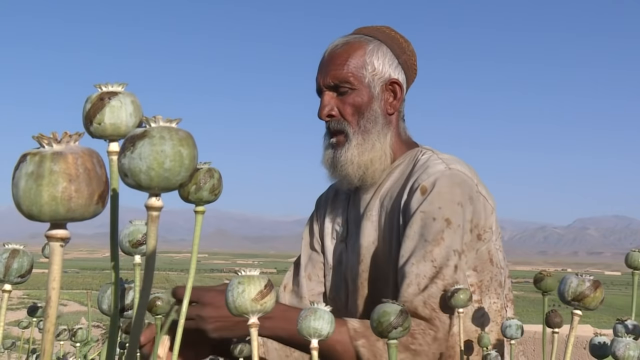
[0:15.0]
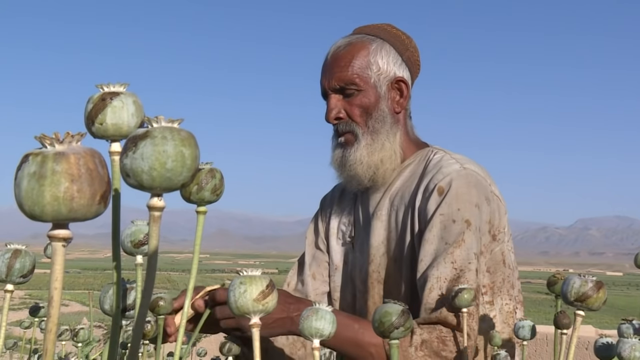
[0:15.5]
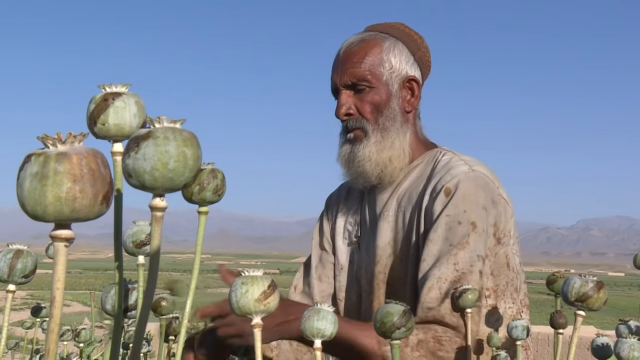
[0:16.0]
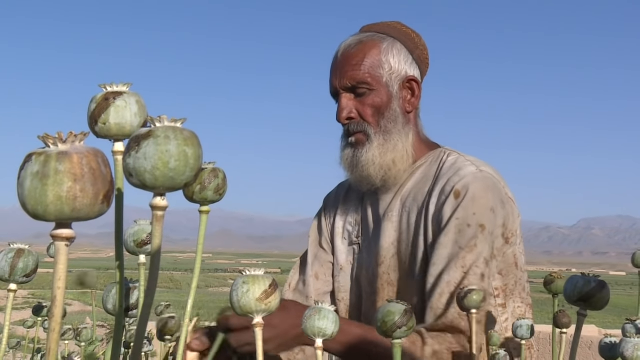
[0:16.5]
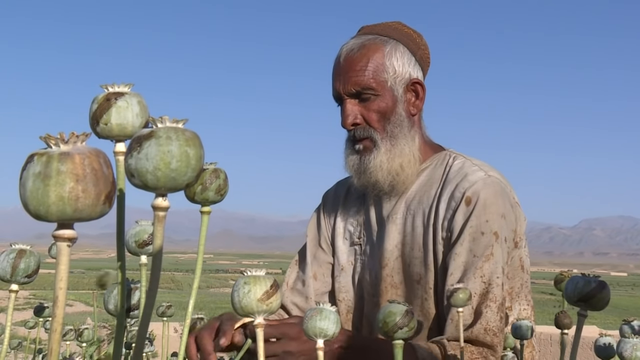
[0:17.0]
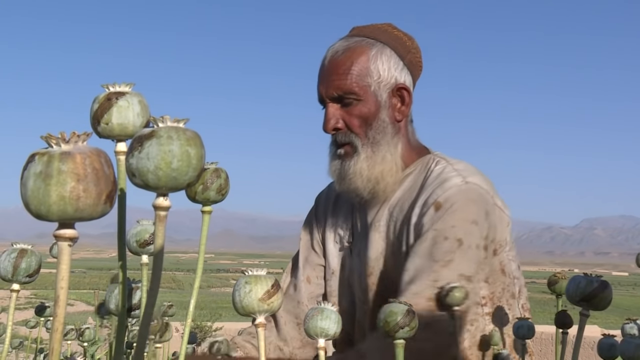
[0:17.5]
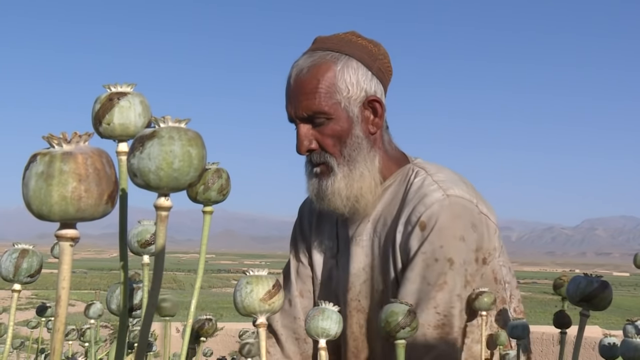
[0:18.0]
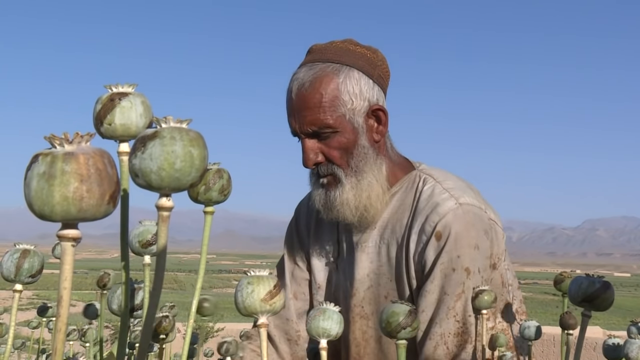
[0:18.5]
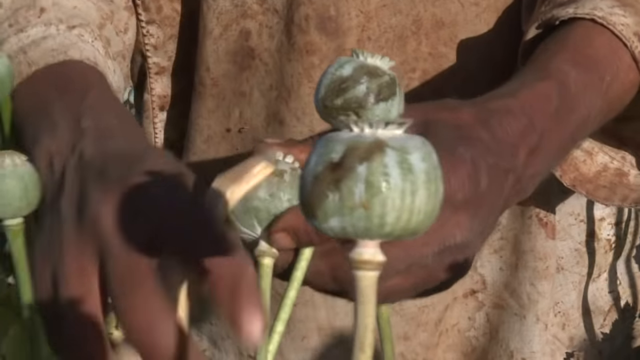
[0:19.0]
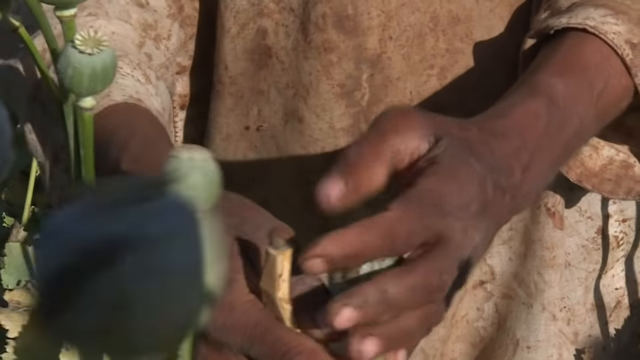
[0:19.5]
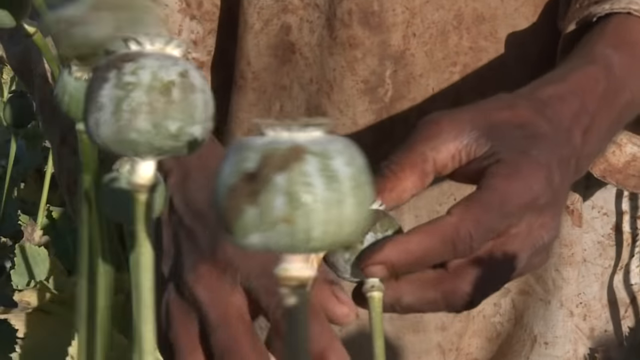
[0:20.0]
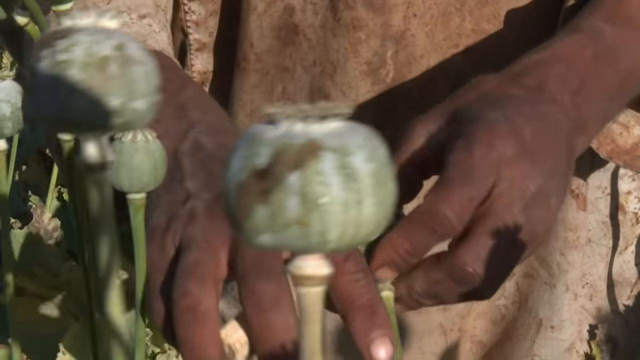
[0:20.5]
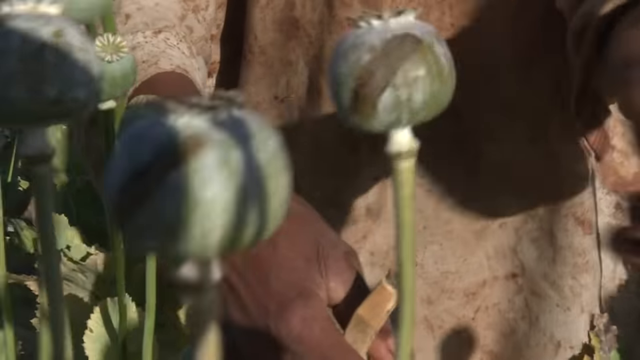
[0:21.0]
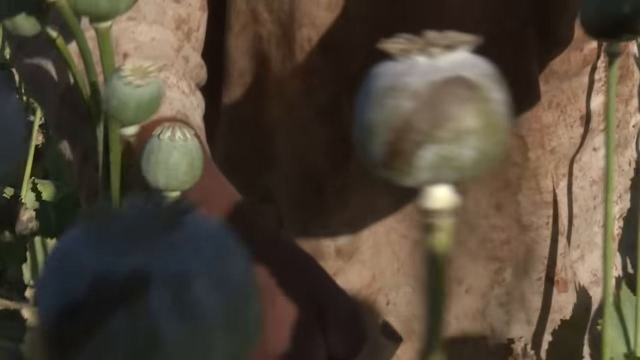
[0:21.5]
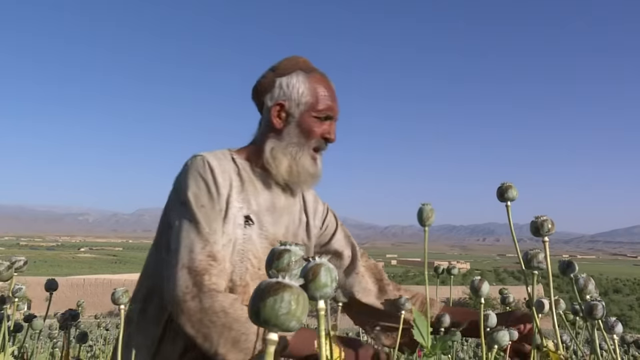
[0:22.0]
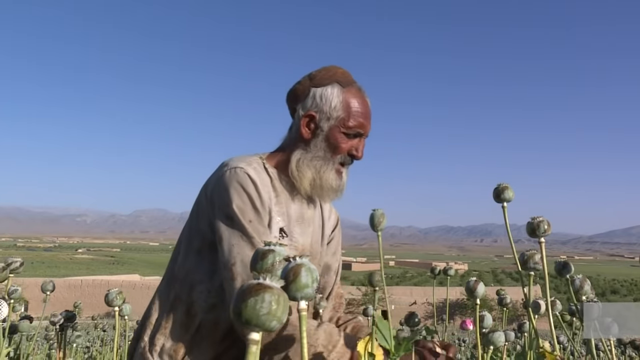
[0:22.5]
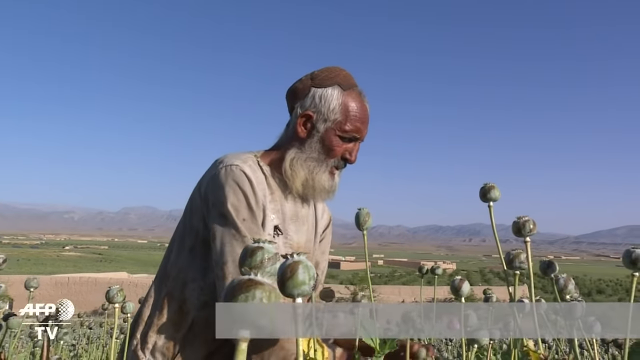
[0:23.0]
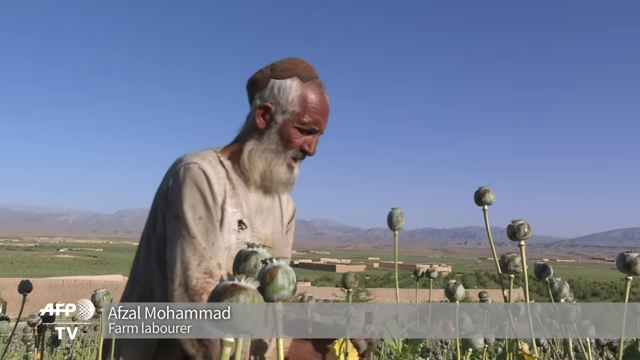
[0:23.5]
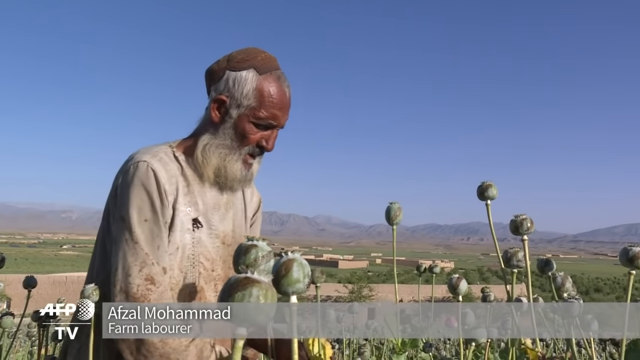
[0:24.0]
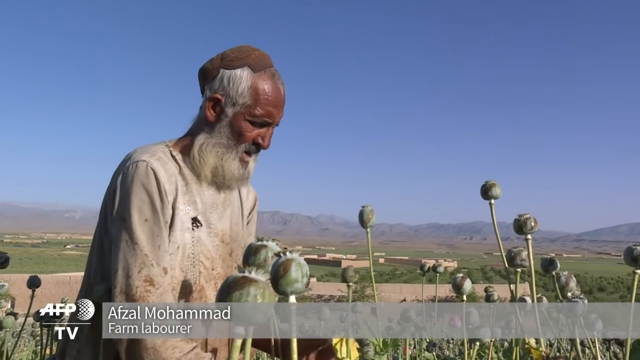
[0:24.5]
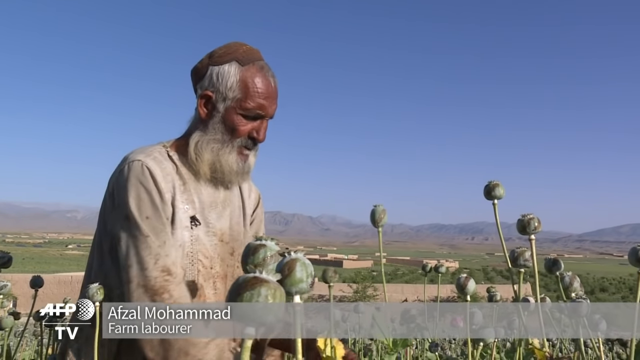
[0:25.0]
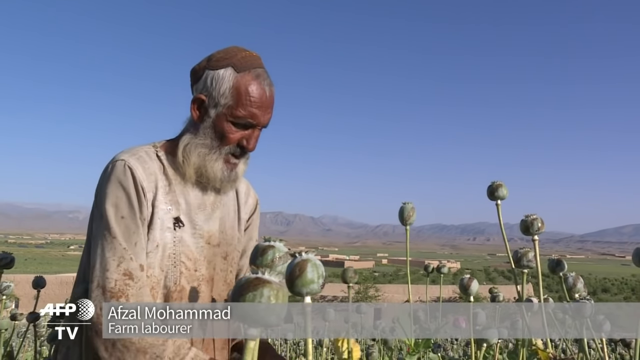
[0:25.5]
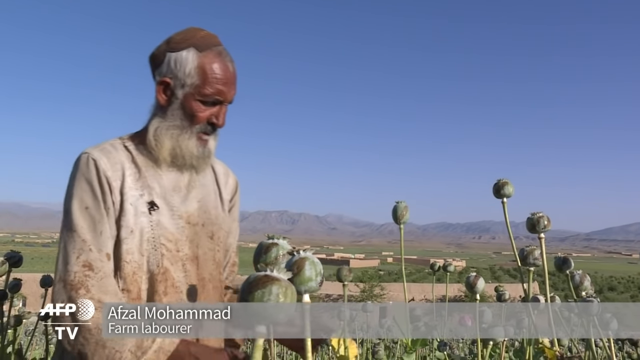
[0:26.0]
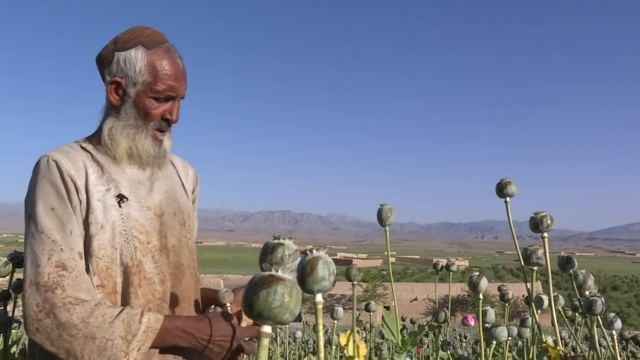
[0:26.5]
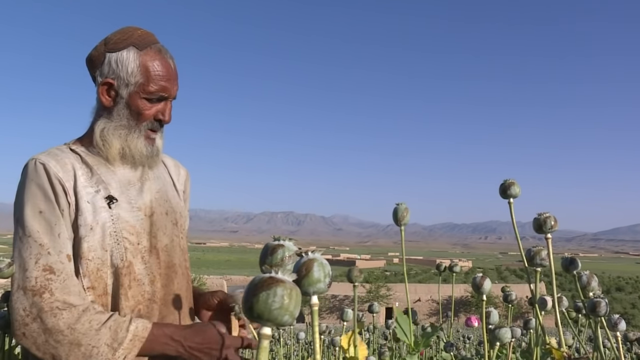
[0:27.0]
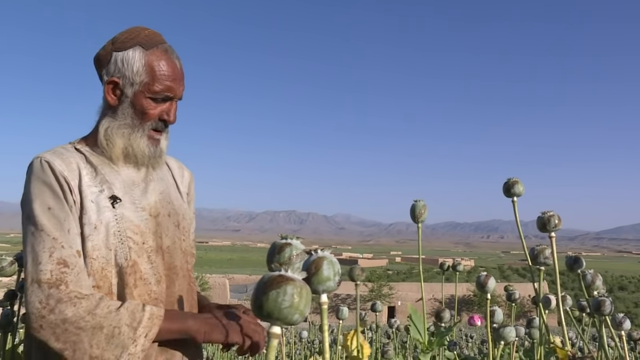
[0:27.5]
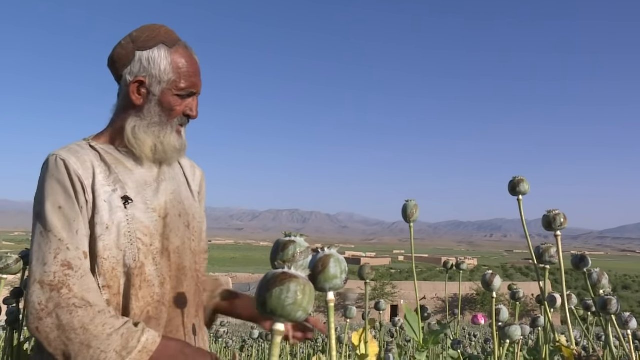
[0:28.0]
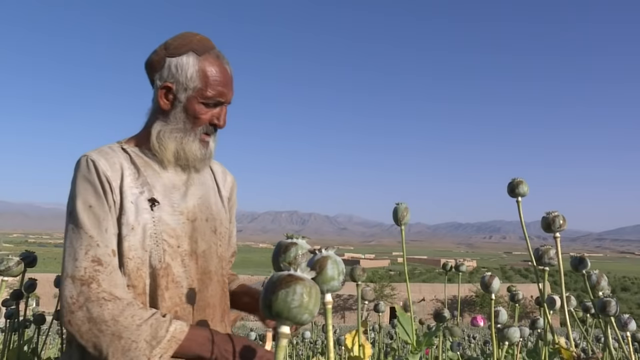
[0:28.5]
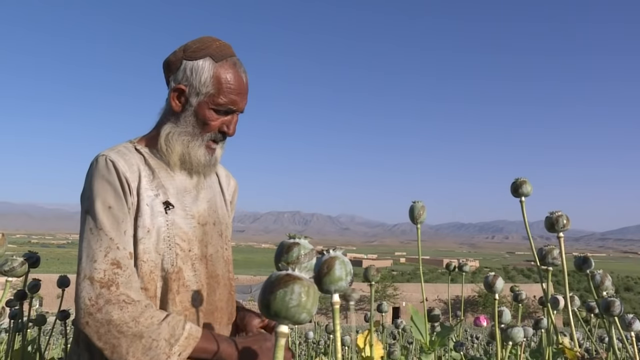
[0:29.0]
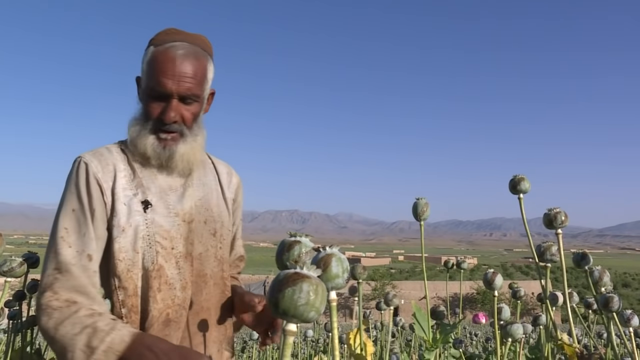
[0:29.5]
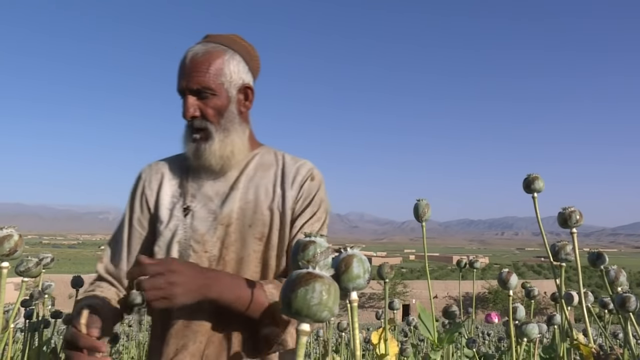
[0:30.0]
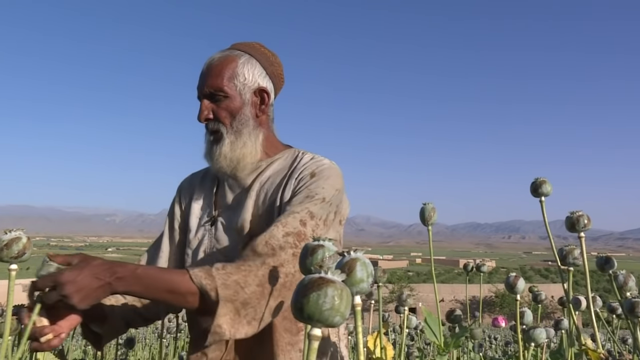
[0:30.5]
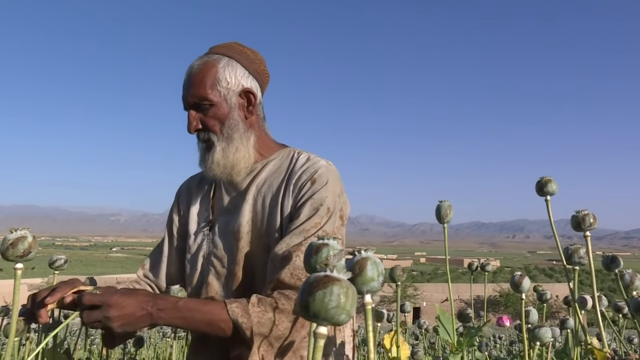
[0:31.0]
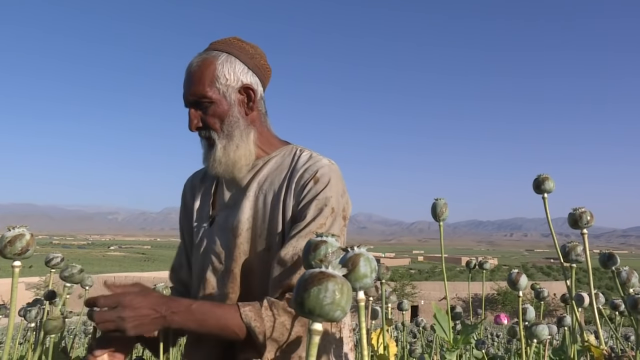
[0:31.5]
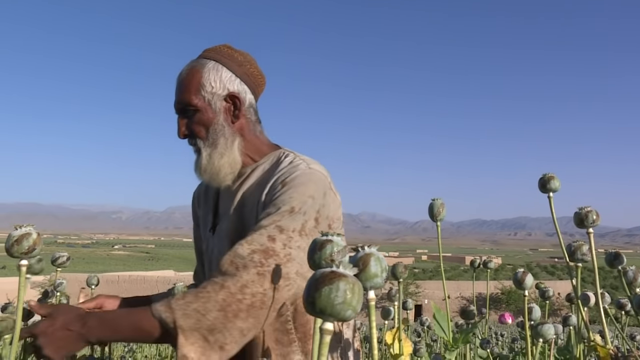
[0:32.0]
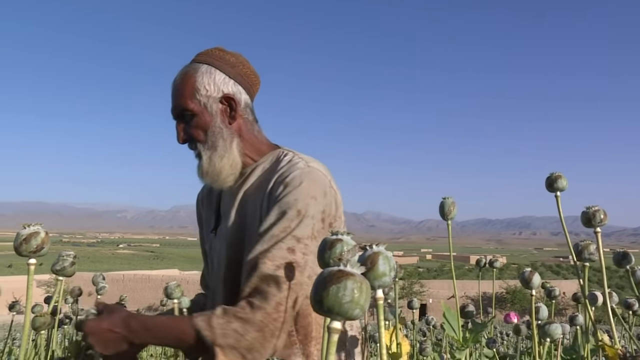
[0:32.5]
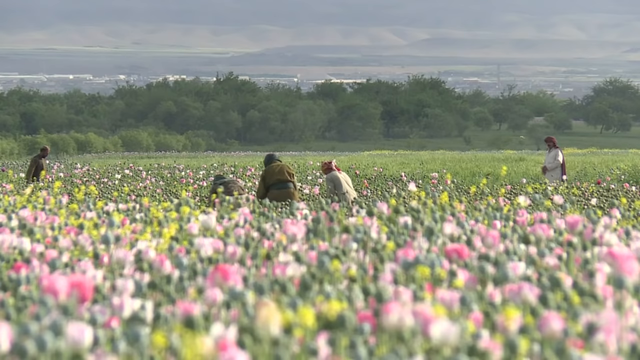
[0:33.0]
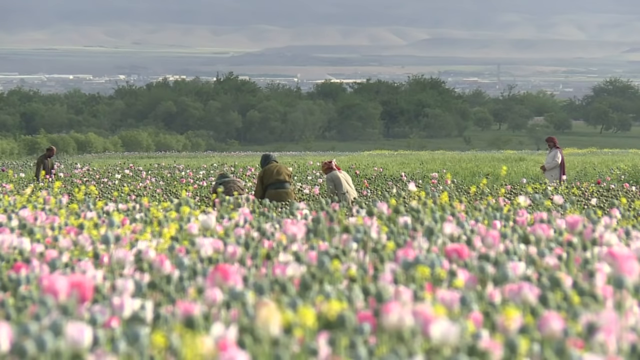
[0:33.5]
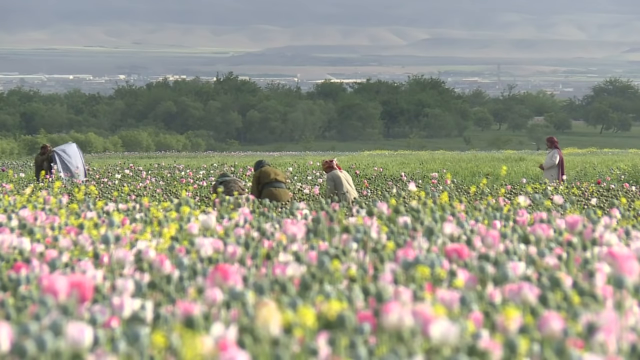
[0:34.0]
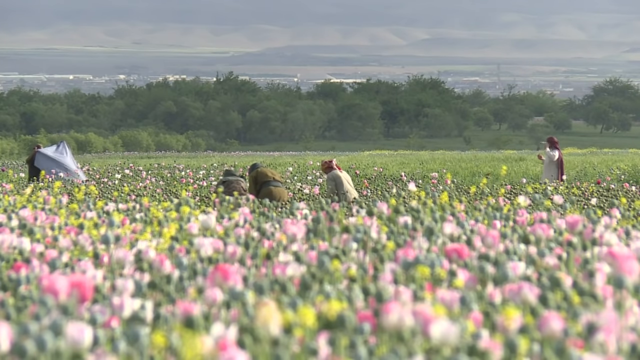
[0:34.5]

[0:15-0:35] An older man with a long gray beard and short gray hair faces the front, slightly to the left. He wears a brown head wrap and a light, kind of dirty white t-shirt, and stands in a field of poppies, many of whose stems rise as tall as him, with green bulbs. In the background are trees, the sky and mountains. The camera moves to the right so his face now faces left, and he picks the poppy. A close-up of his hands follows; he looks like he is peeling something off the poppies with a very short, dirty-looking knife. In another shot his head faces right as he continues peeling the poppies. His name is Afiyal Muhammad, and the screen identifies him as a farm laborer. He turns his face to the left as he keeps working on the poppies. A wider shot shows four people about midway up, working in the poppy fields; they are hard to make out in the distance and are kind of bent over at the waist, so only a little of their backs and their heads show. The poppies are green with pink and purple at the top, and a couple of yellow flowers are visible. In the distance are more mountains, trees and a nice blue sky with a couple of small gray clouds.